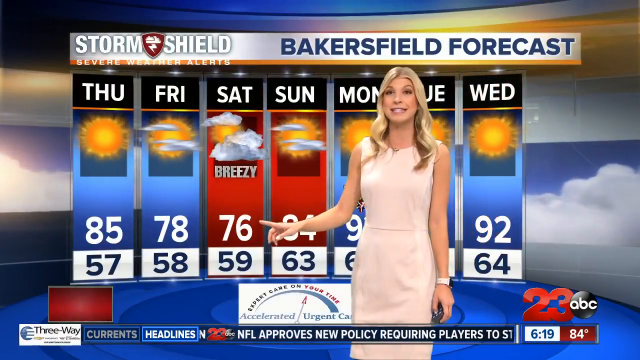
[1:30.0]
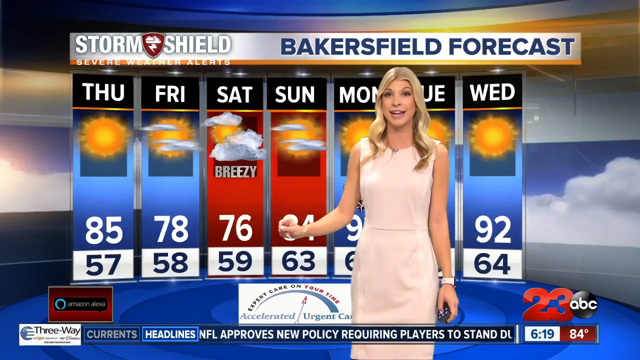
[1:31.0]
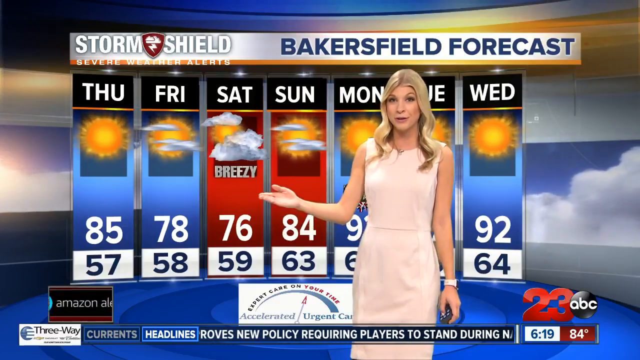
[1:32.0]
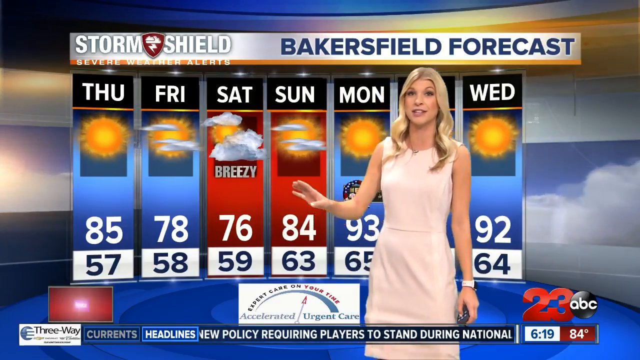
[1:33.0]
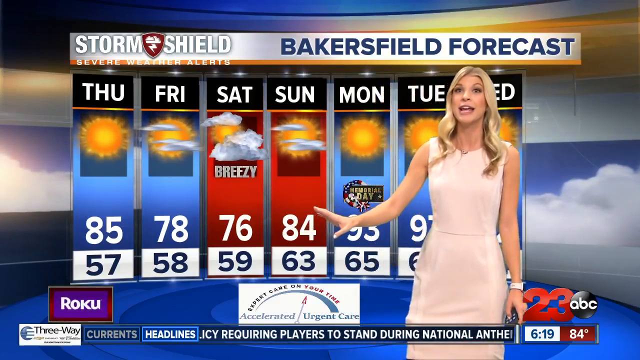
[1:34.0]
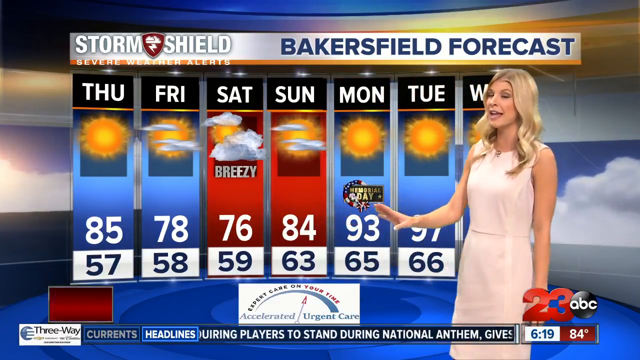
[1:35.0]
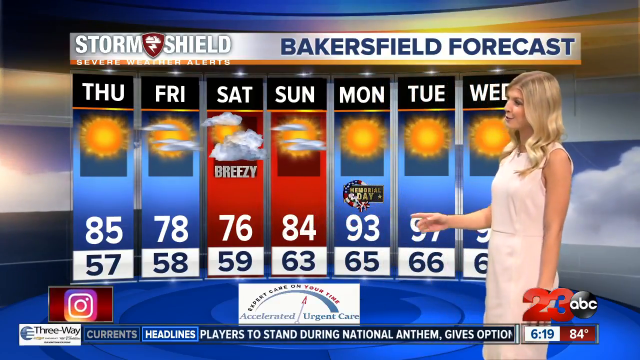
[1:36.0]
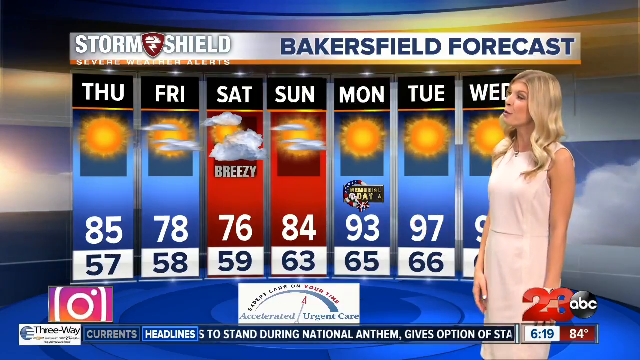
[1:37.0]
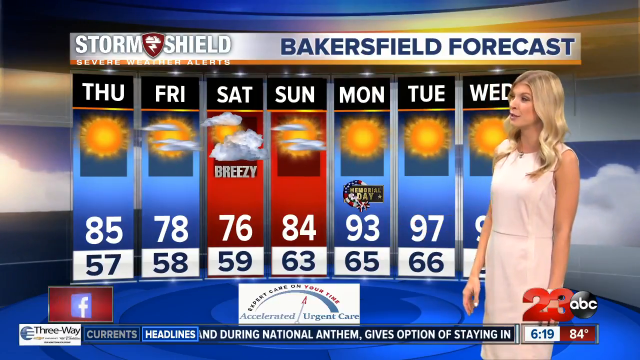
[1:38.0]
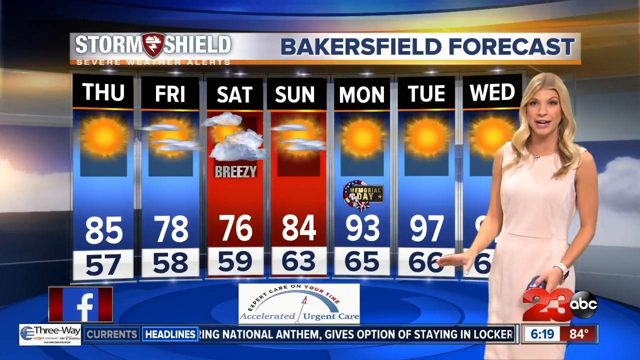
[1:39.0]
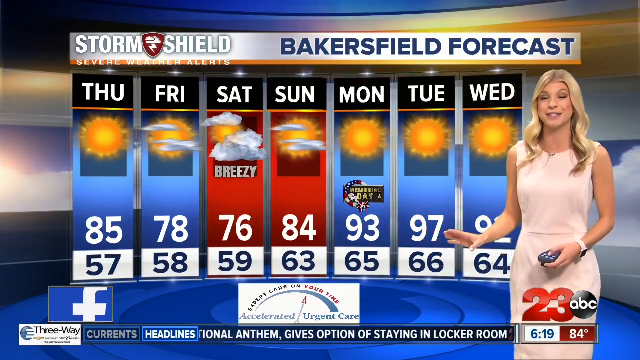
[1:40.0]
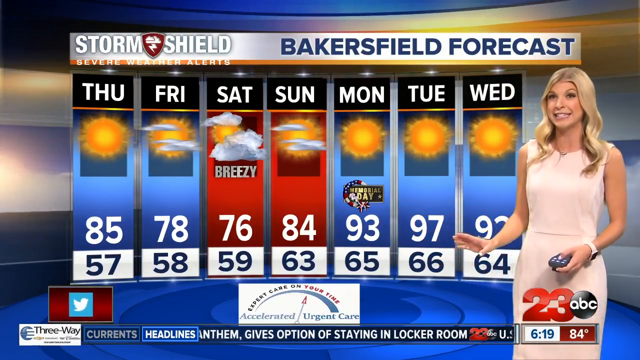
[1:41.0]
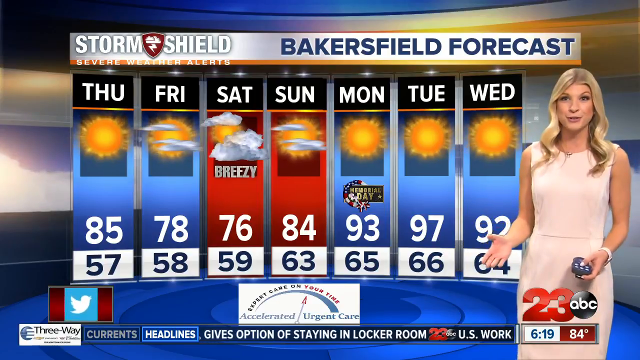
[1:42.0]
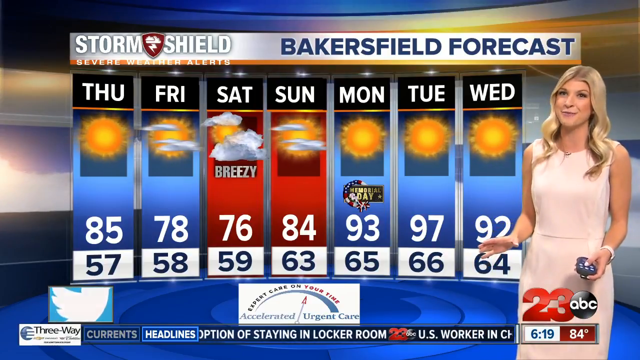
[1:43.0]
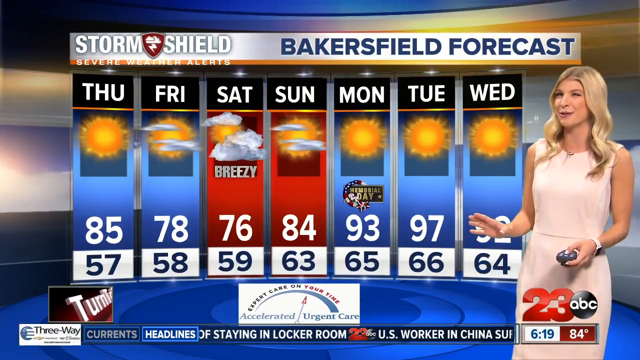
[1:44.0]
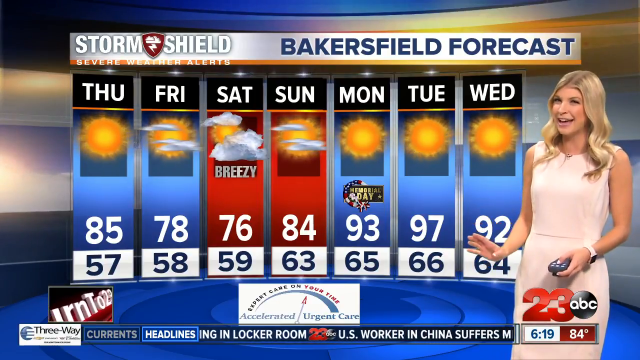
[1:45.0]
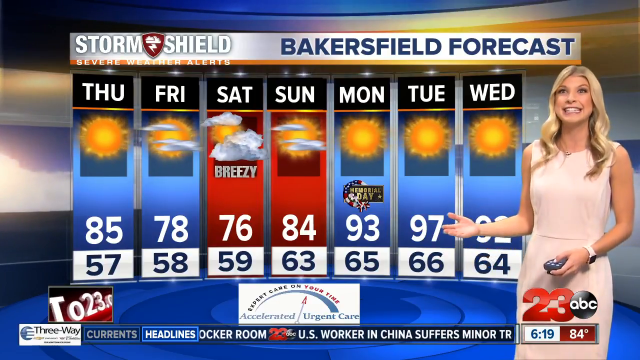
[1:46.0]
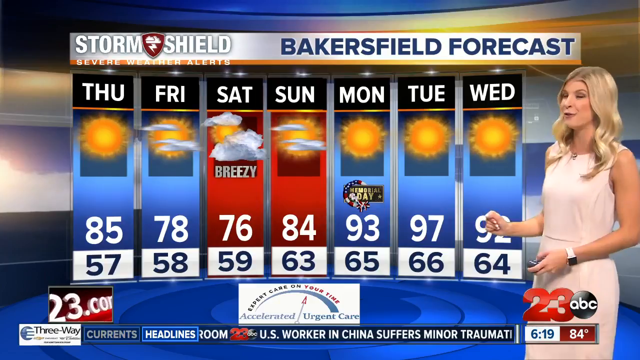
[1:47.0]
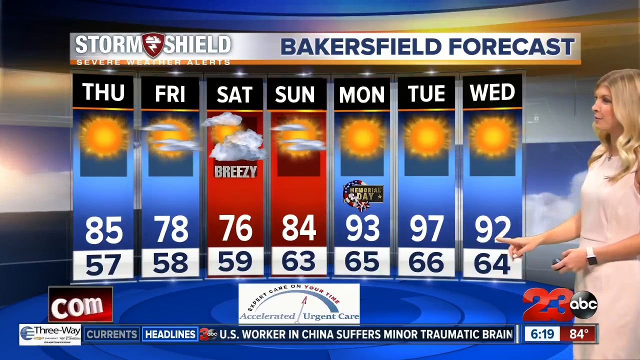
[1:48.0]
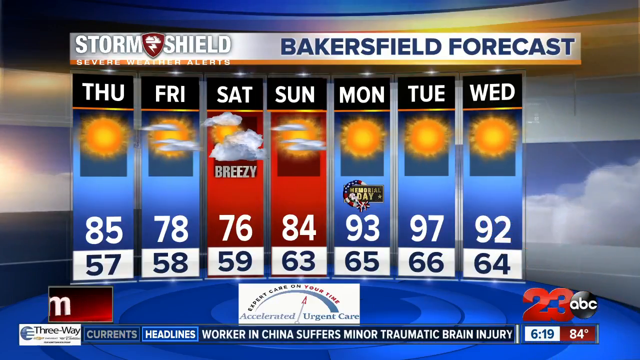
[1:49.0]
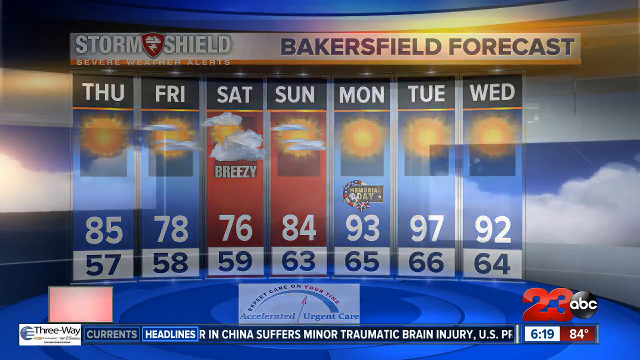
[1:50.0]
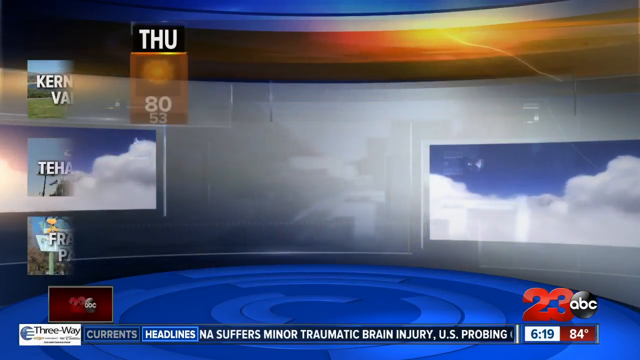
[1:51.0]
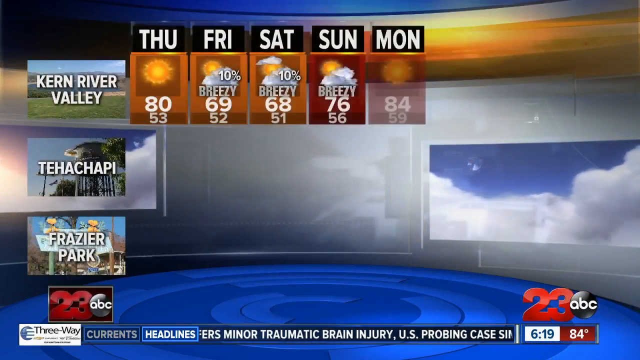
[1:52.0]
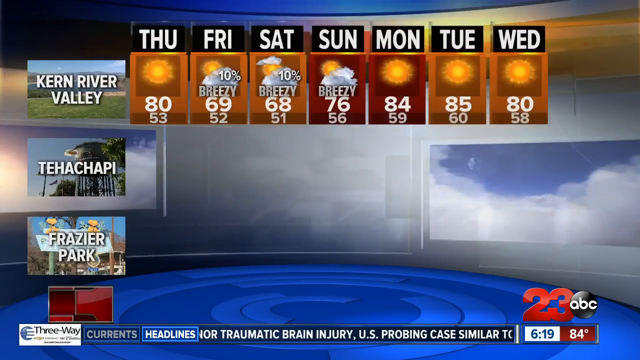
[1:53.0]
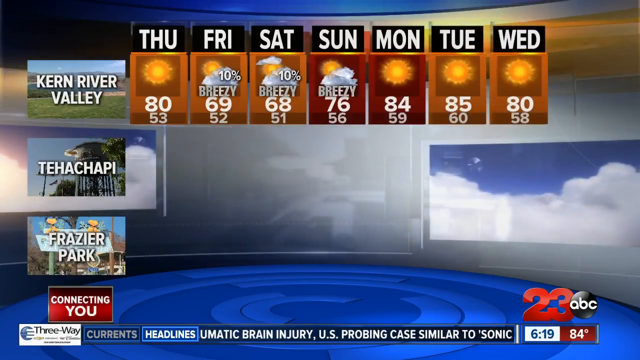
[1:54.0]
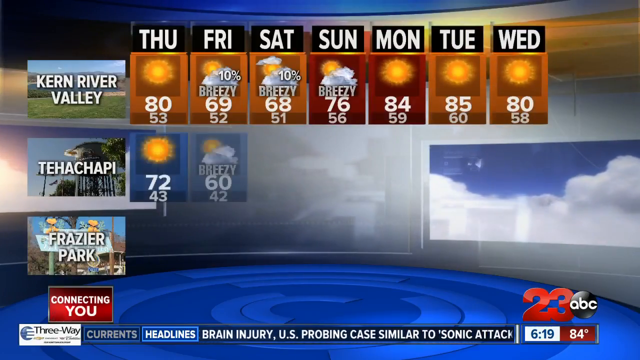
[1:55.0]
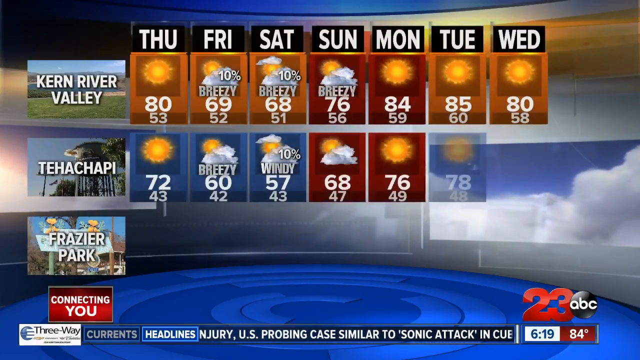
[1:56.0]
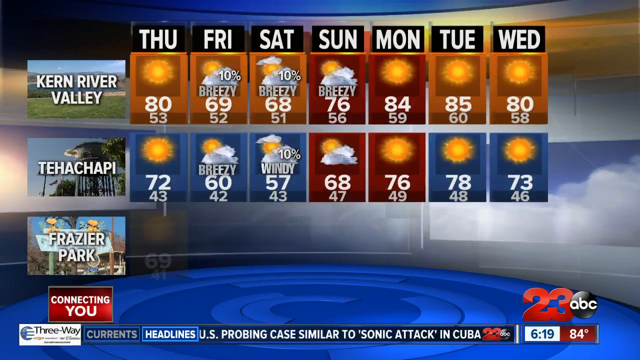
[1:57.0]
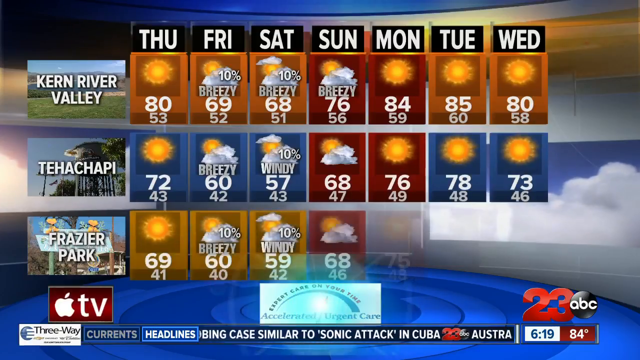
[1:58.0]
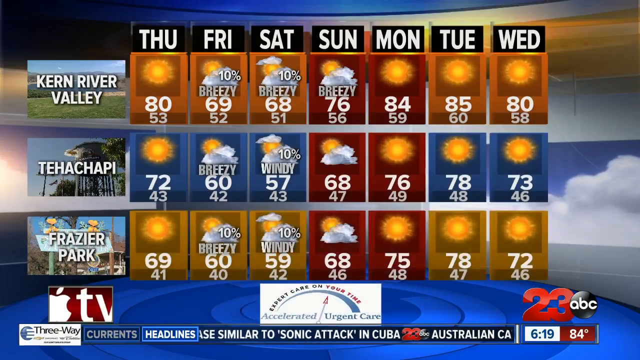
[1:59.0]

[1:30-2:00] The weather girl is shown with the Bakersfield forecast, whose title seems to be the main title at the beginning. The forecast covers the whole week, from Thursday to the next Wednesday. She points to Saturday, which is labeled "breezy"; Saturday and Sunday both seem to be highlighted in red, with no label explaining why. She then points at Monday, Memorial Day, which has a stamp-like label with the name of the holiday. Tuesday looks to be the hottest day, with the highest temperature, while Thursday looks to have the chilliest minimum temperature; the chilliest maximum is on Saturday, at 76 degrees Fahrenheit. The weather girl then leaves the screen through the right-hand side, and another graphic appears with a Thursday to Wednesday forecast for Kern River Valley, Tehachapi and Frazier Park, showing the maximum and minimum temperatures for all three cities over that period.